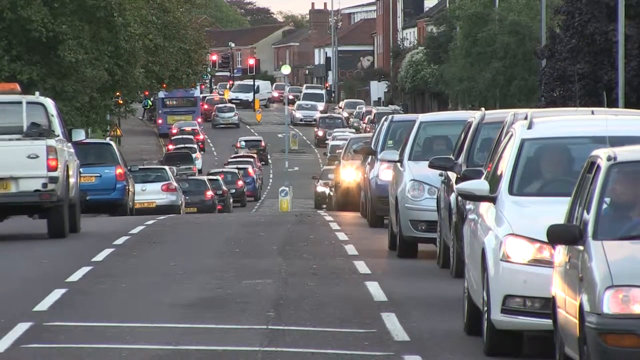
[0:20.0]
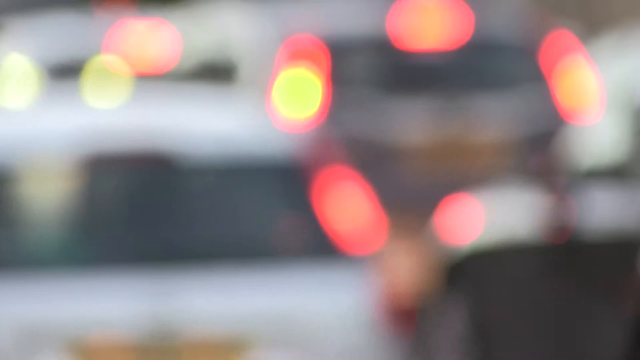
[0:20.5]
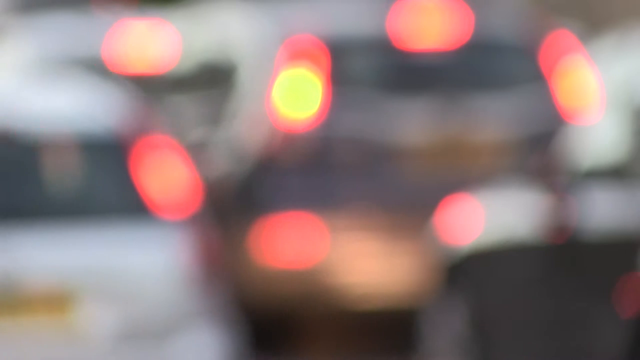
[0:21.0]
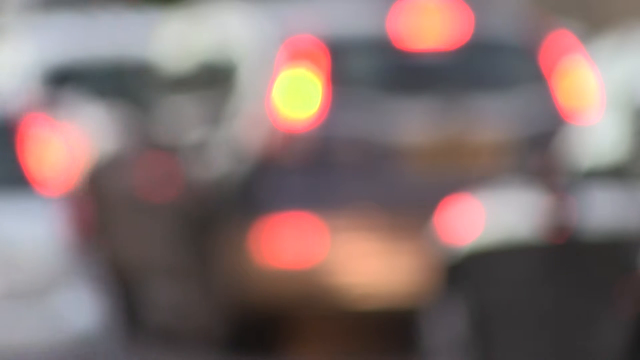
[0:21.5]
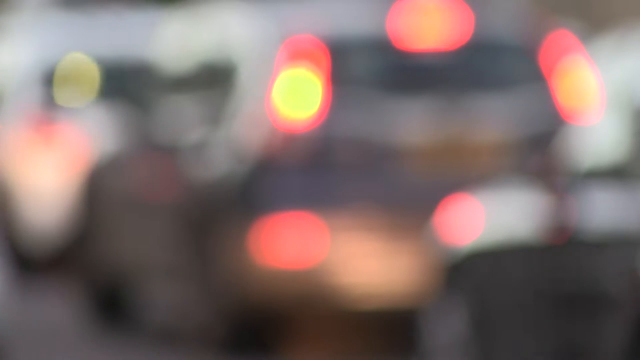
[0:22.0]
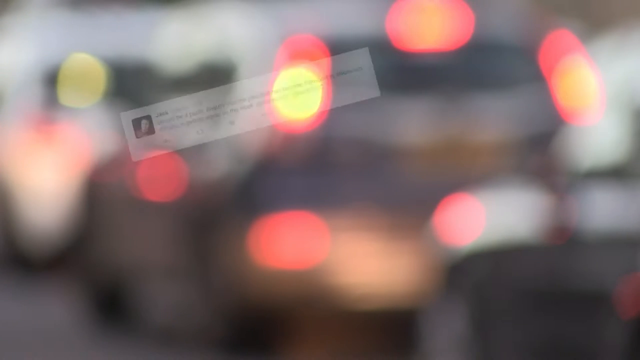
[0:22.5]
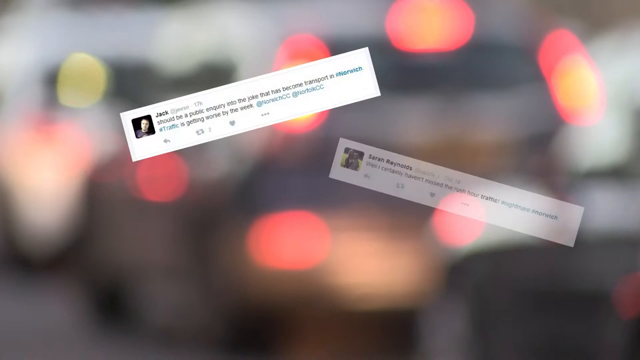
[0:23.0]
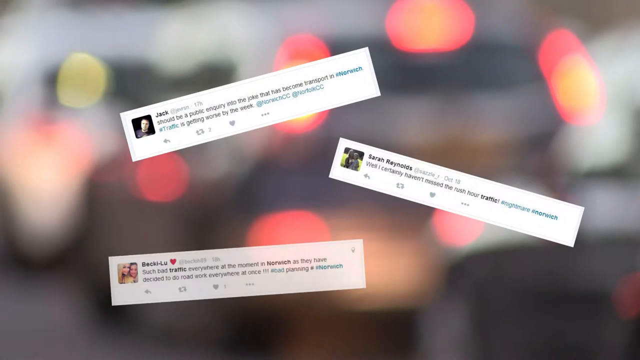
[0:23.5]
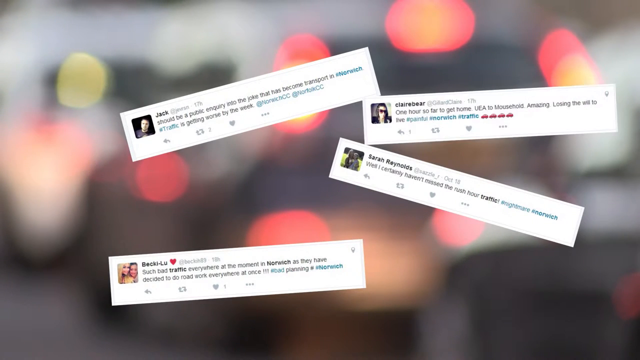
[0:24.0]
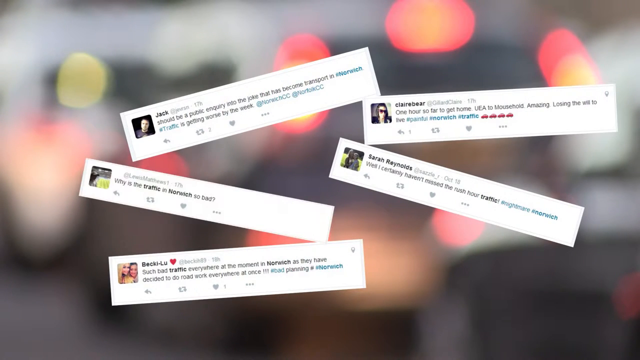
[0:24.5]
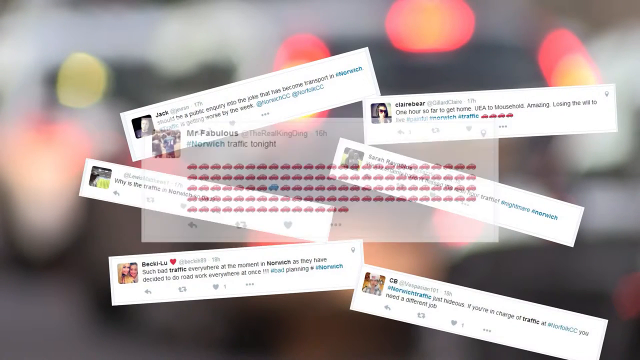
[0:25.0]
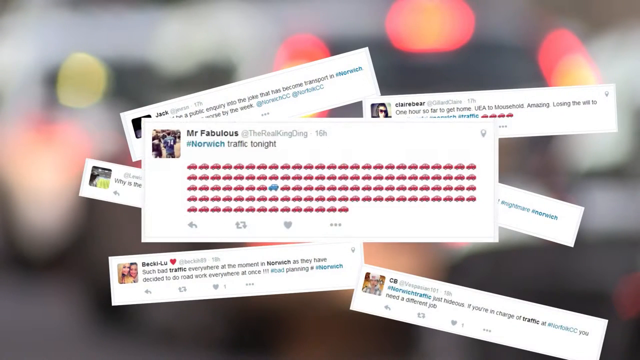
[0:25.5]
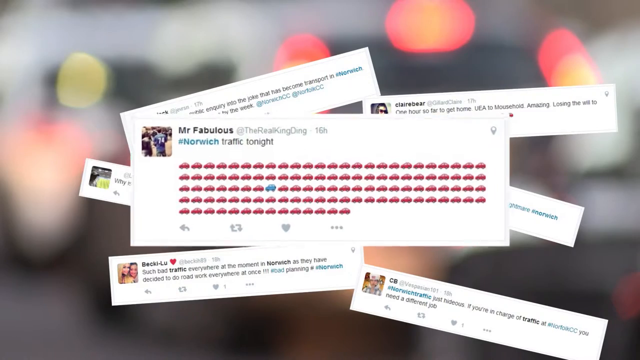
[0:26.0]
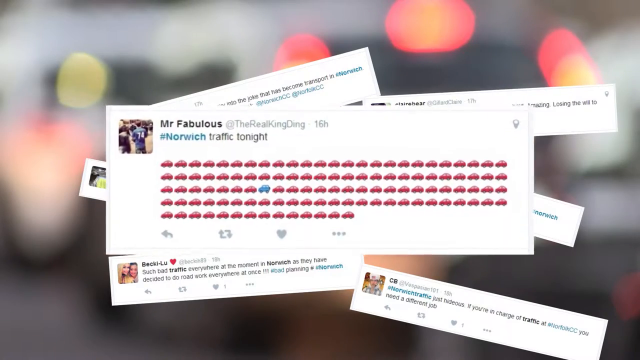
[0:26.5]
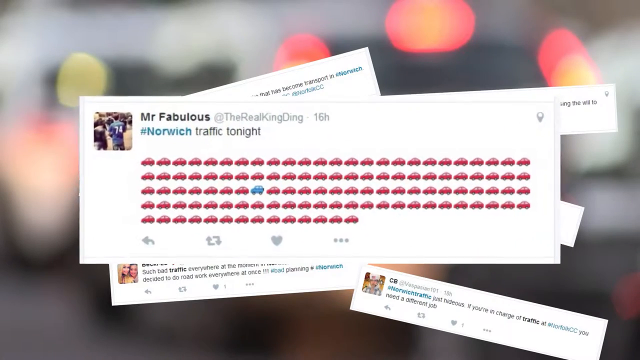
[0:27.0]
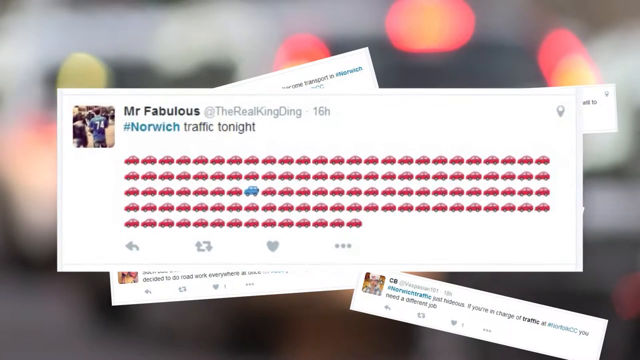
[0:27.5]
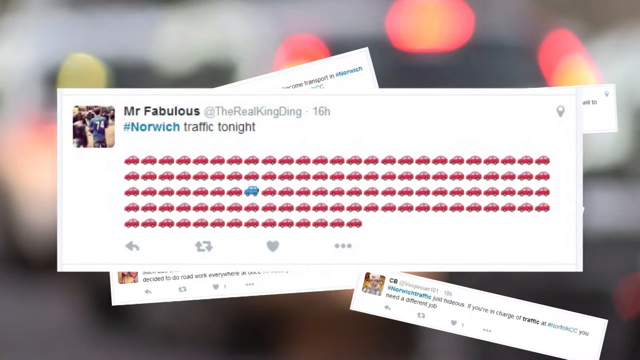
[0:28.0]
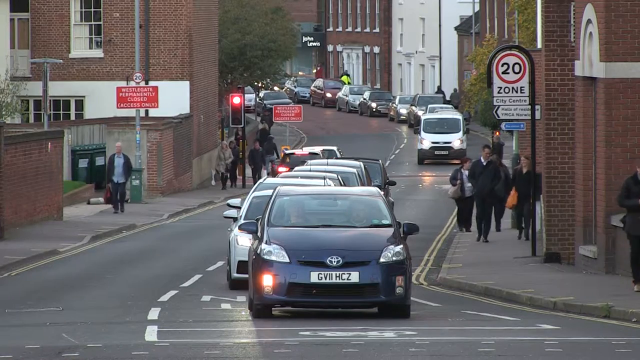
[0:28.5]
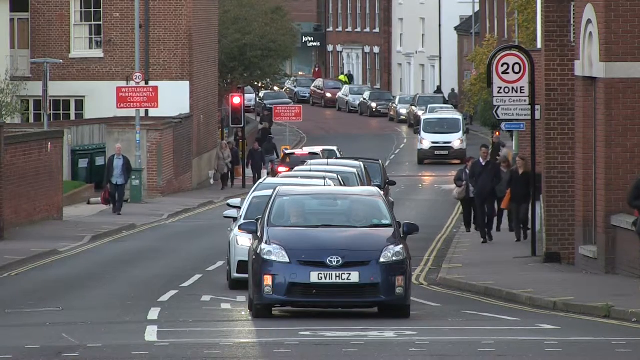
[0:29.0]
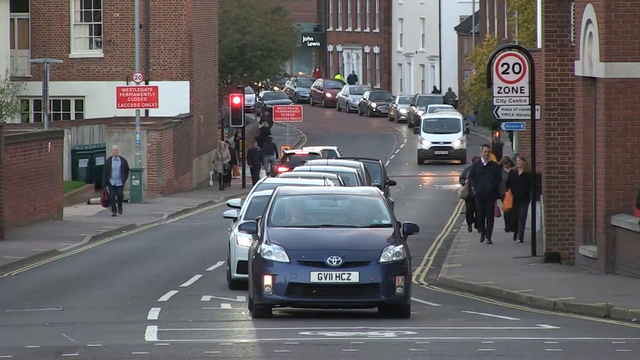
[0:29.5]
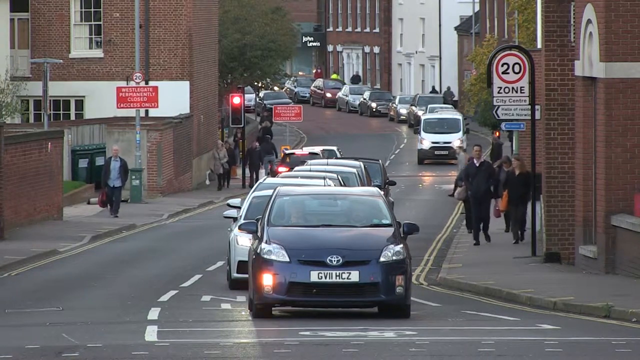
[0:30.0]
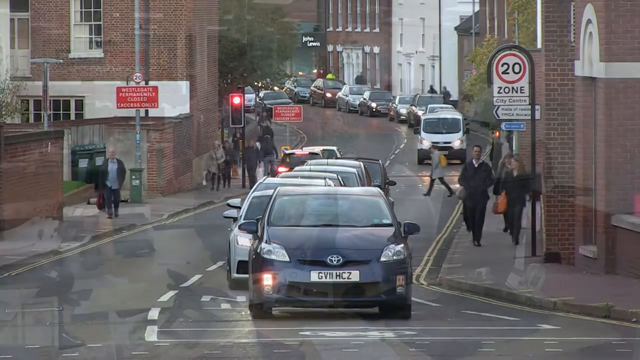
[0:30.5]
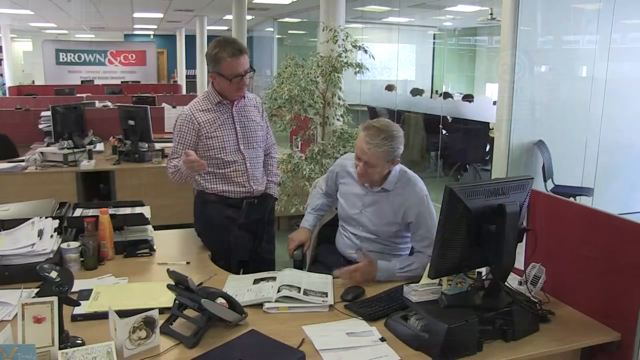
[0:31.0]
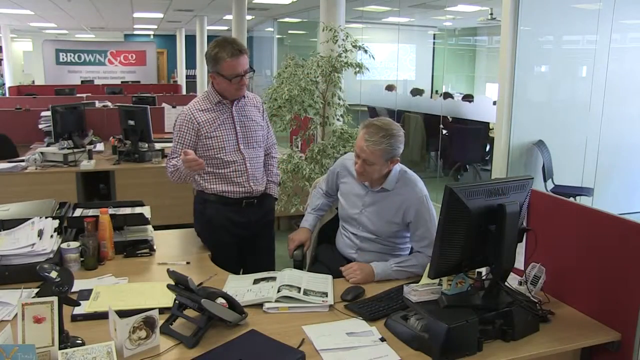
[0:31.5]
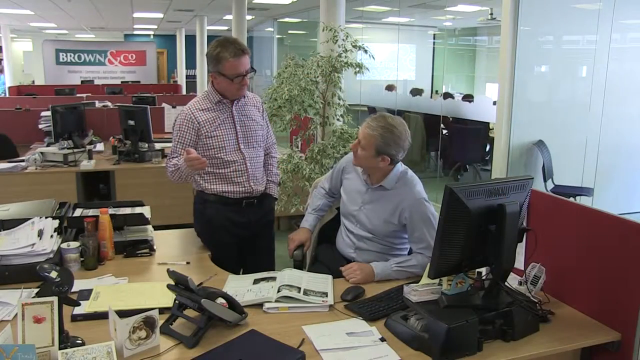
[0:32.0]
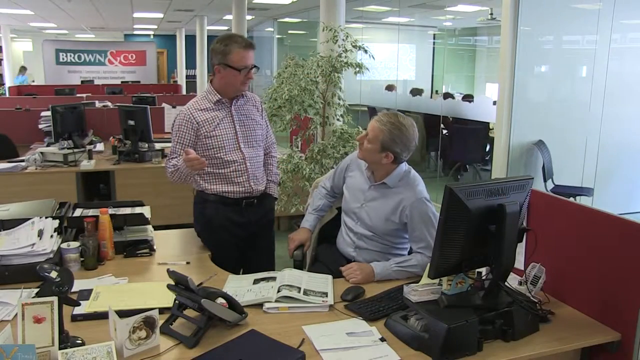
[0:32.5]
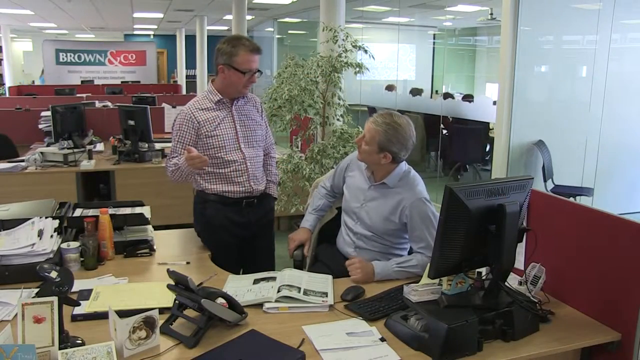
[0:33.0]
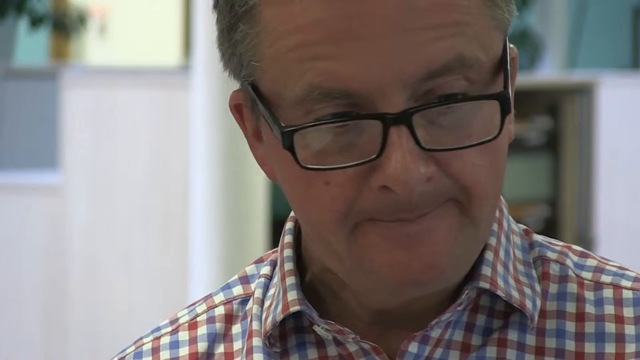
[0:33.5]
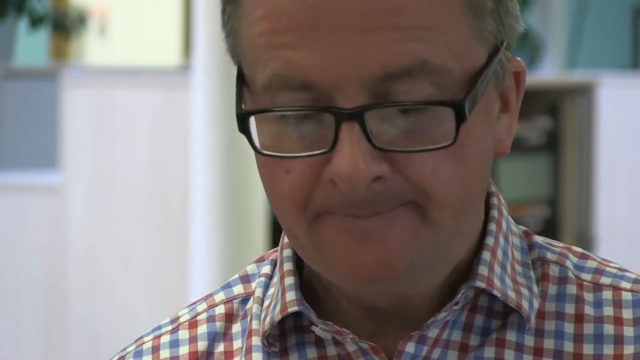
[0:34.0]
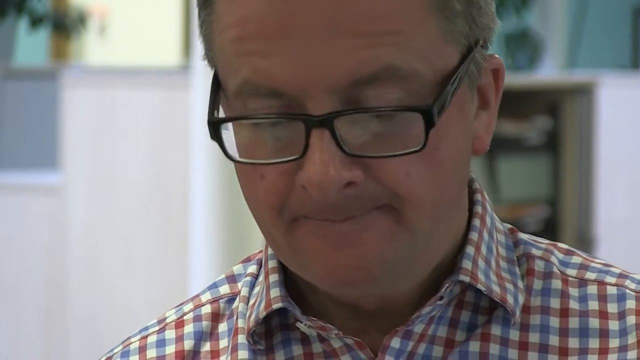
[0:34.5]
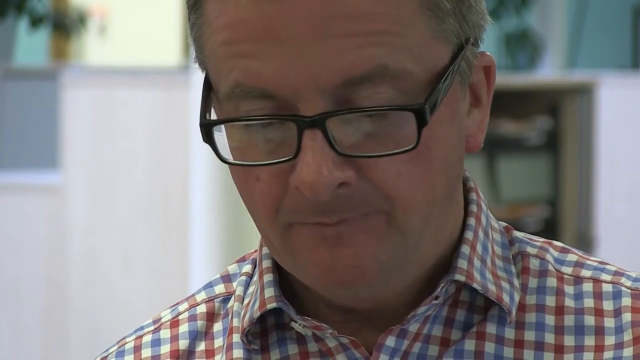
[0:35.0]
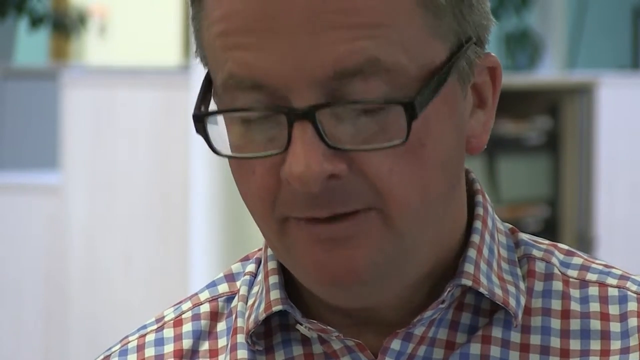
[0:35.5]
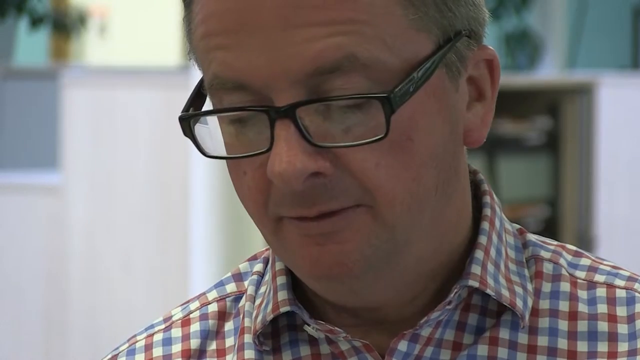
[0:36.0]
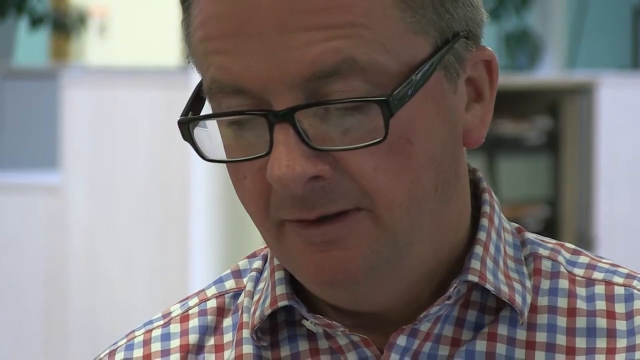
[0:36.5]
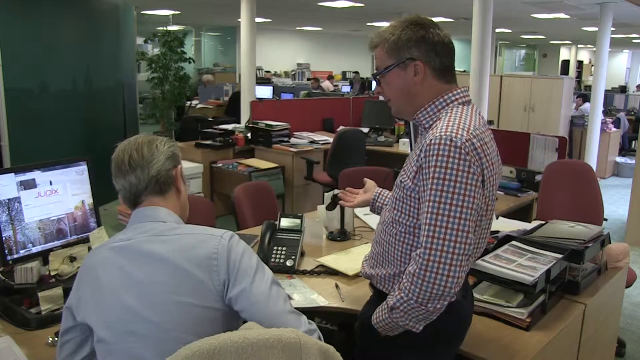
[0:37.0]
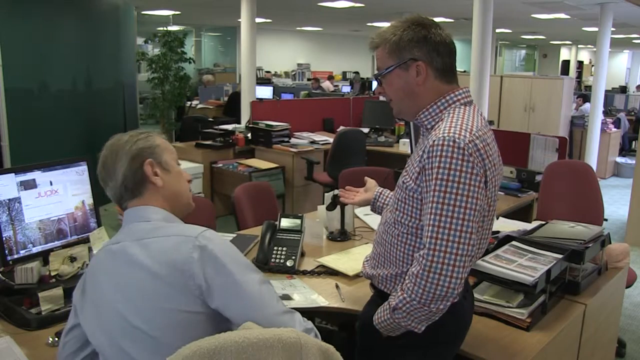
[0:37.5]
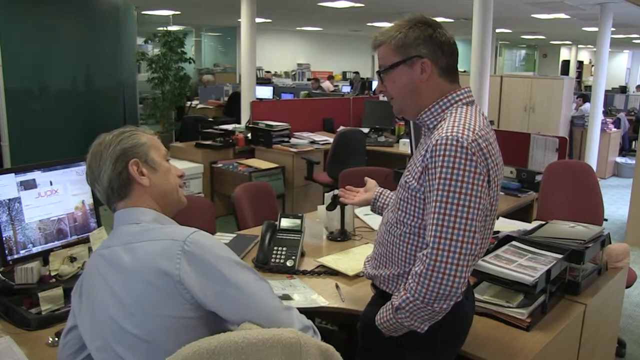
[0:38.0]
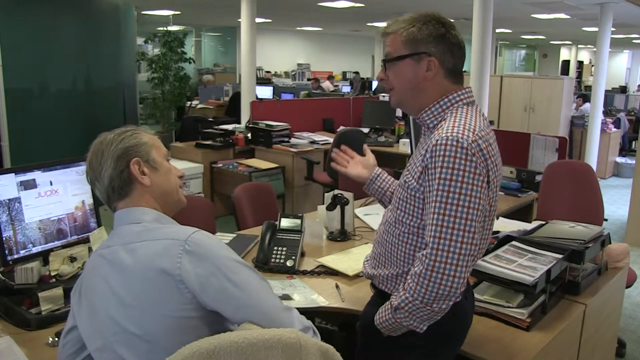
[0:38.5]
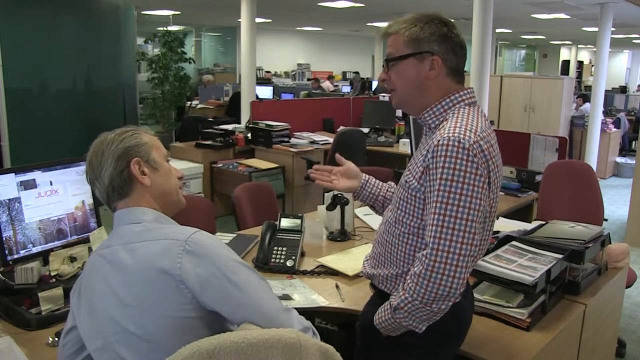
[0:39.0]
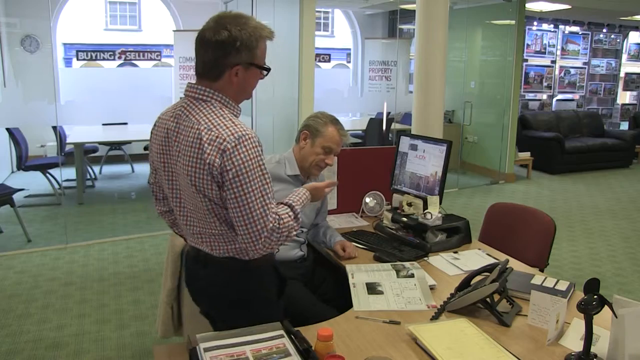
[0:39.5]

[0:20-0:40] A blurred-out image in the background shows a number of social media posts in which people complain about the traffic; one mentions "traffic tonight". Images show a lot of cars on the road. The camera zooms into one particular tweet on the screen, in which a user complains about the convoy and the traffic. The camera then pans to show more cars on the actual road and people moving along the route. The scene moves to what resembles a newspaper or publishing establishment, where two white men, one wearing a checked shirt and glasses, seem to be discussing the social media post about the convoy. The office space has office chairs and desks, and other people are visible in the background. The two men continue their discussion, presumably about the traffic and how it can be controlled.